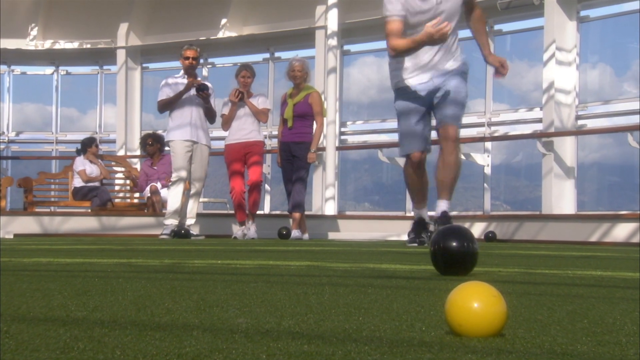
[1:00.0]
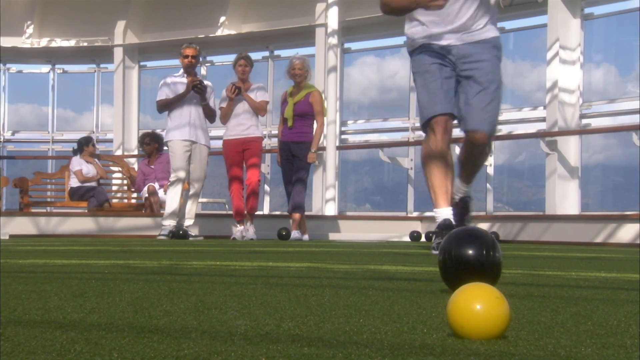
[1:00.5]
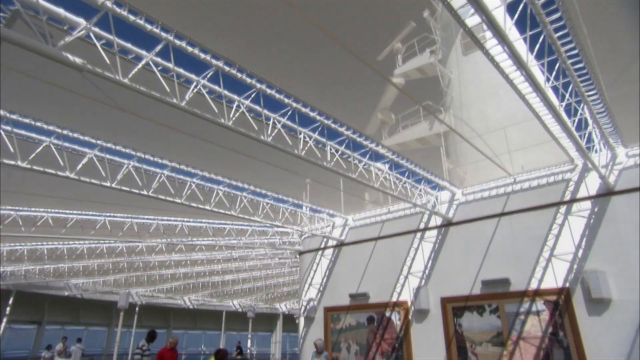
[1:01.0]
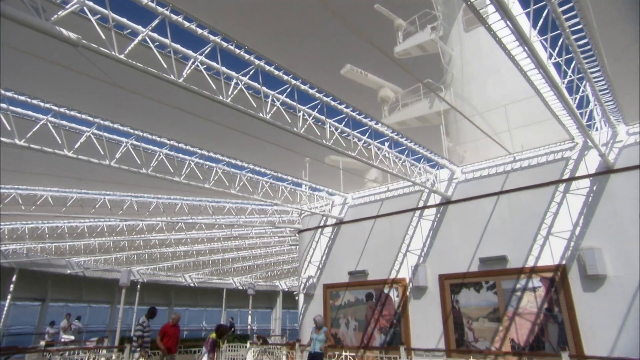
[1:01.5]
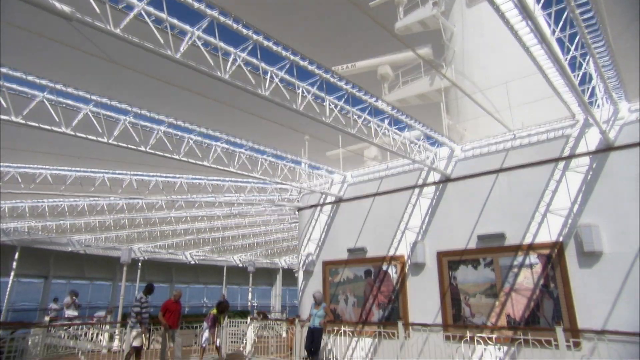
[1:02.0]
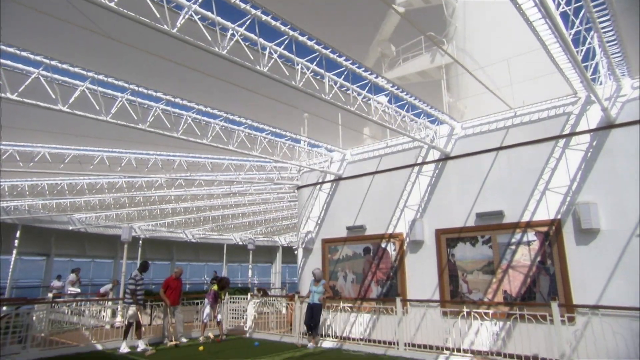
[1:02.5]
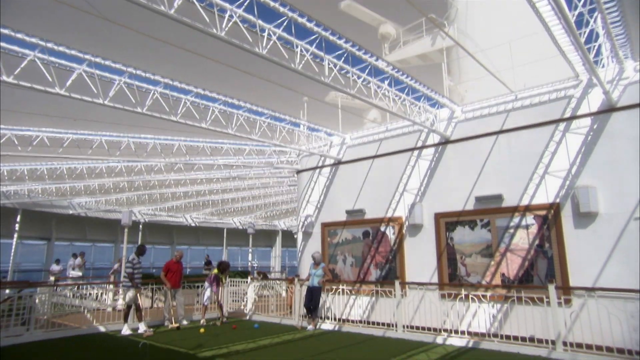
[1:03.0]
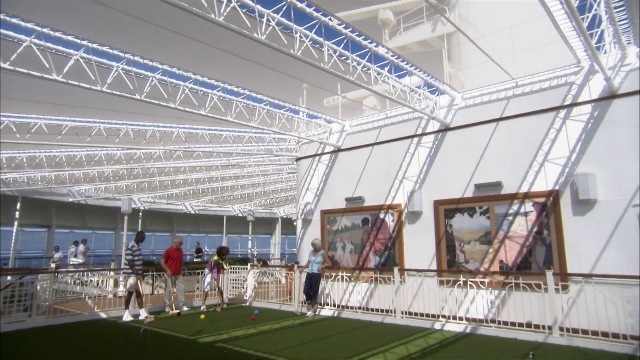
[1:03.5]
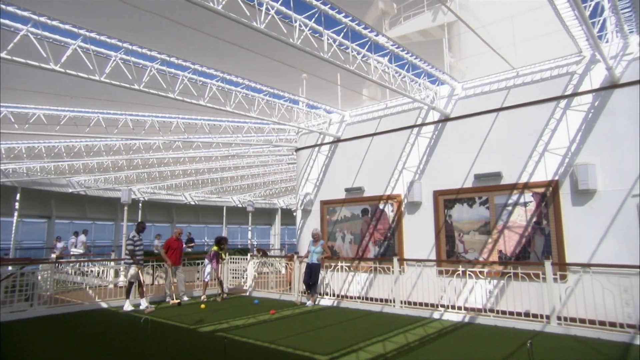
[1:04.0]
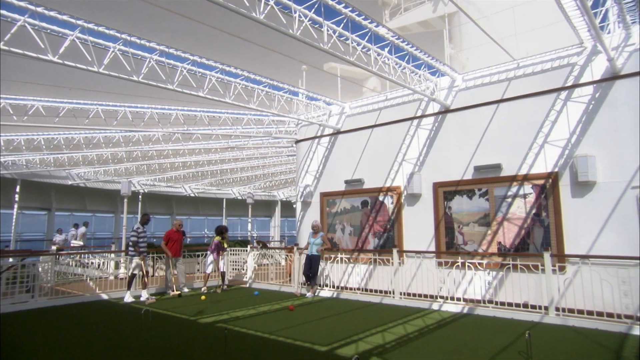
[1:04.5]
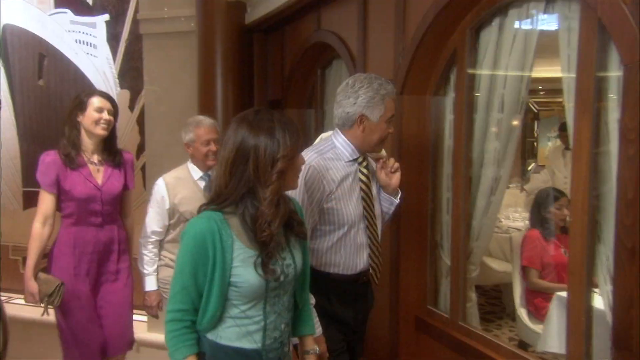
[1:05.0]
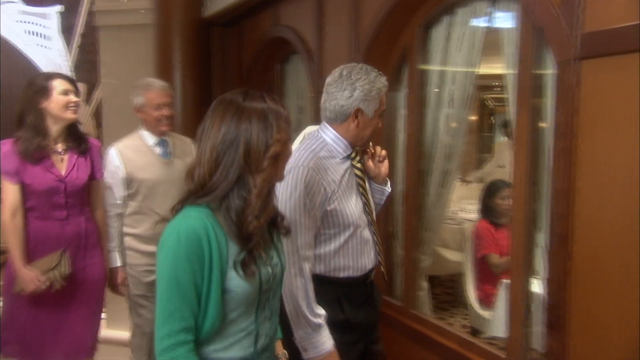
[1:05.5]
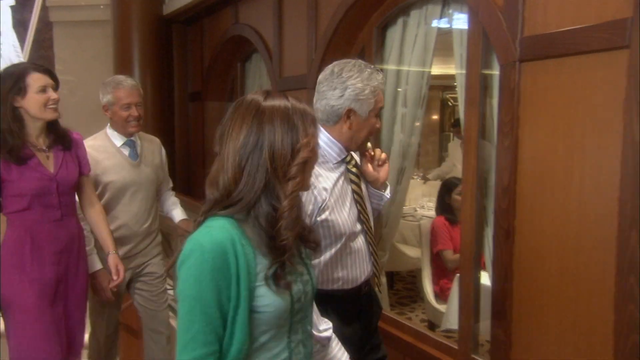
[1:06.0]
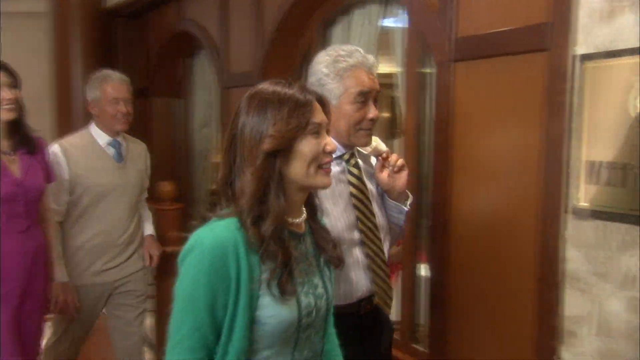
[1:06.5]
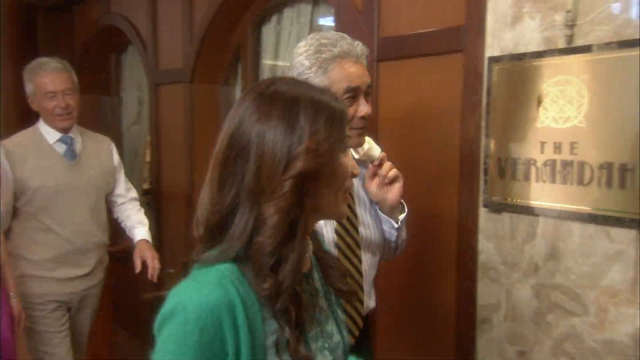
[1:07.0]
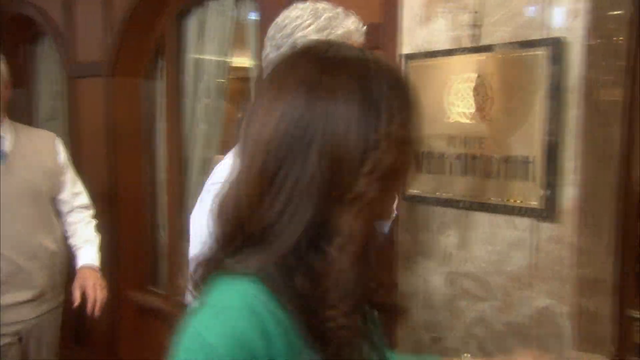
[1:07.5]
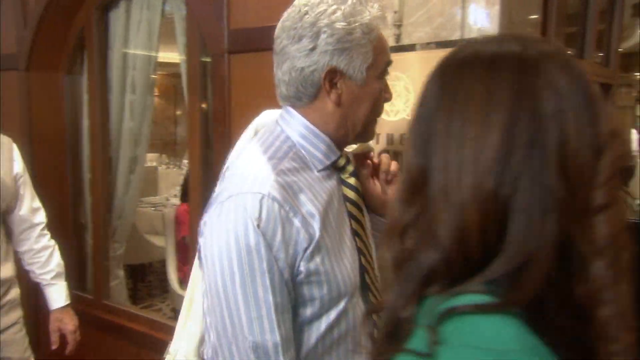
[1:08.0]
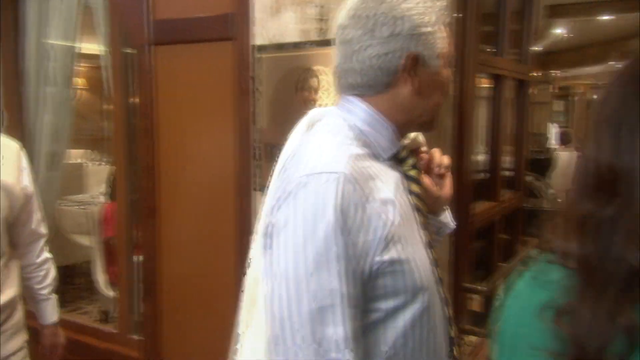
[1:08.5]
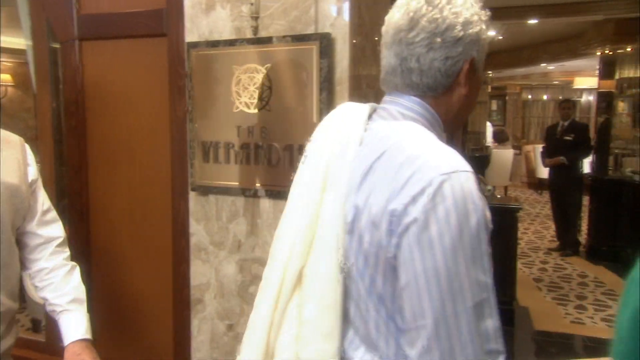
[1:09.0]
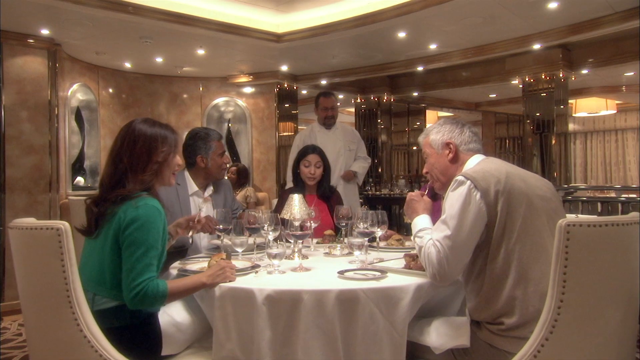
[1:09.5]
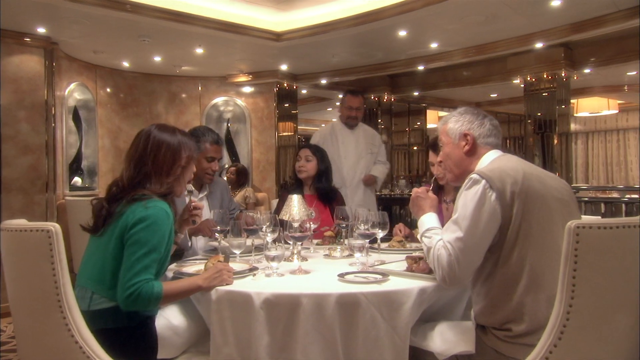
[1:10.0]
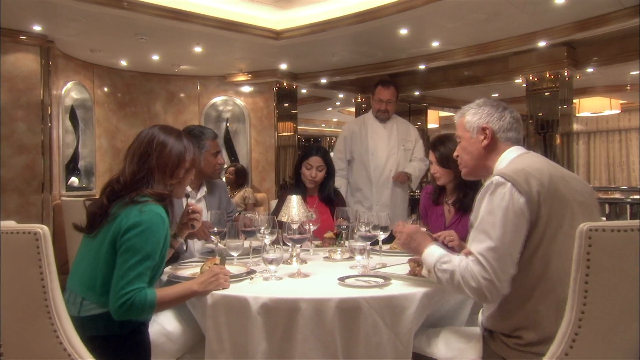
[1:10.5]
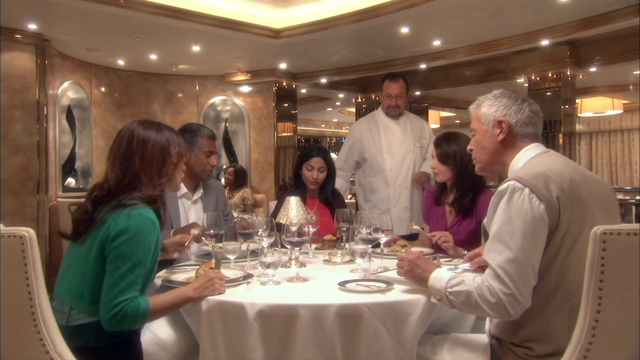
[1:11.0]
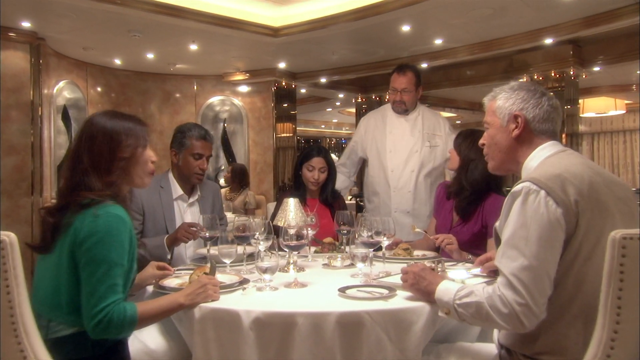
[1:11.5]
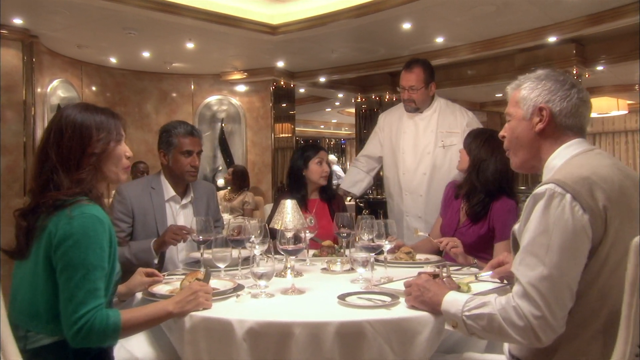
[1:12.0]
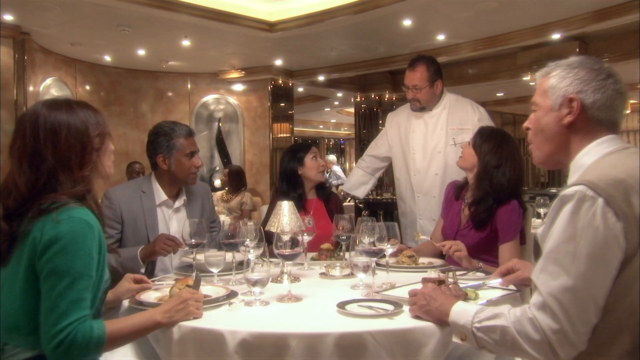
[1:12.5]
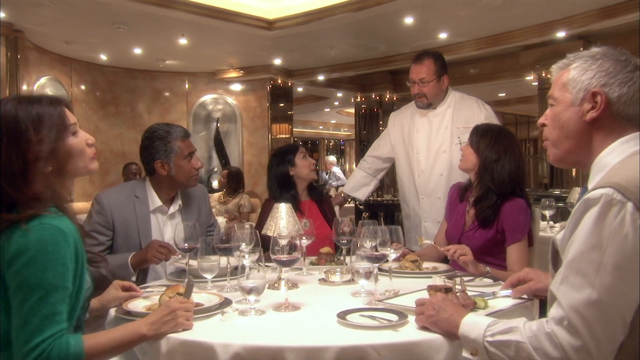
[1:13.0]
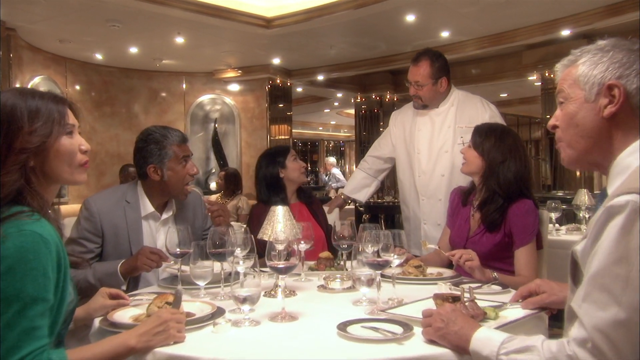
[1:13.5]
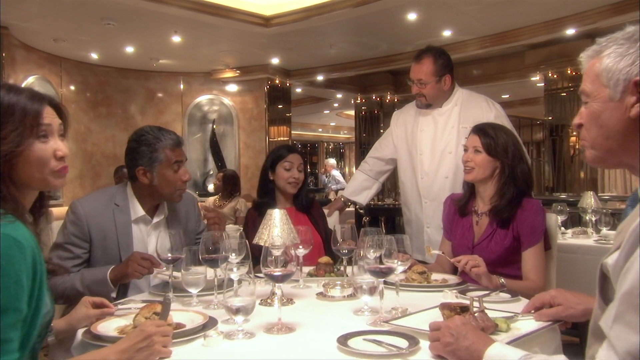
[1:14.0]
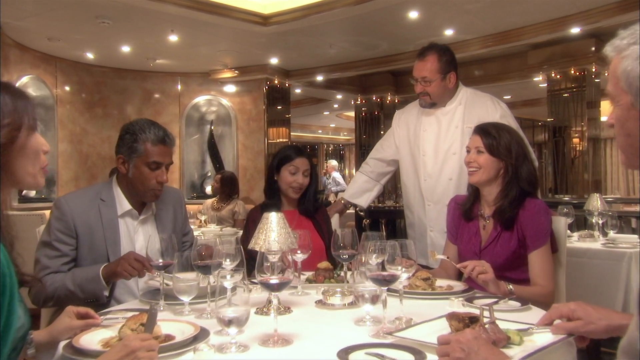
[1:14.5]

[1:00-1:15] Four people, two men and two women, play a game that looks like it might be bocce on the outdoor deck of a cruise ship. They are animated. The man bowling the ball wears blue shorts and a white shirt. In the upper left-hand corner, text reads "Cunard, Queen Elizabeth." Next is another outdoor area of the ship with what appears to be a putting green, where several people are playing. Then two couples, including a man with gray hair in a button-down shirt with a woman beside him, walk down a hallway and go into a storefront inside the ship; the first woman is in a green dress and the woman behind her is in a purple dress. The same couple then sits at a table in a restaurant while a waiter in a white coat serves them. They appear to be smiling and happy, getting ready to enjoy a meal.